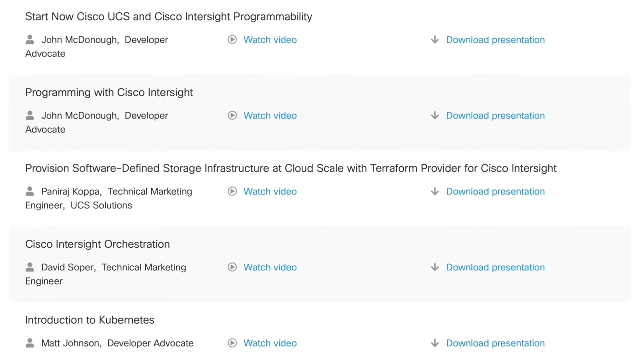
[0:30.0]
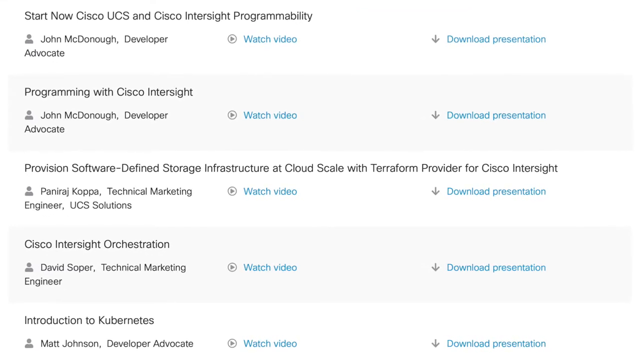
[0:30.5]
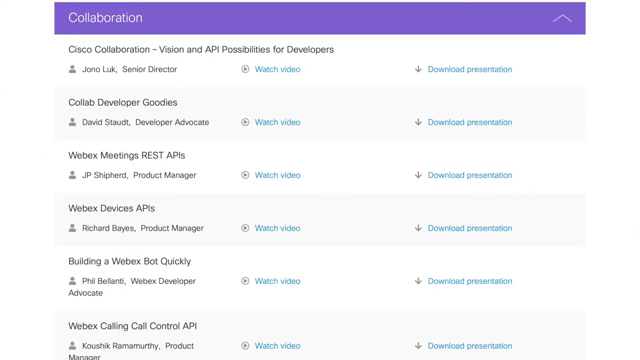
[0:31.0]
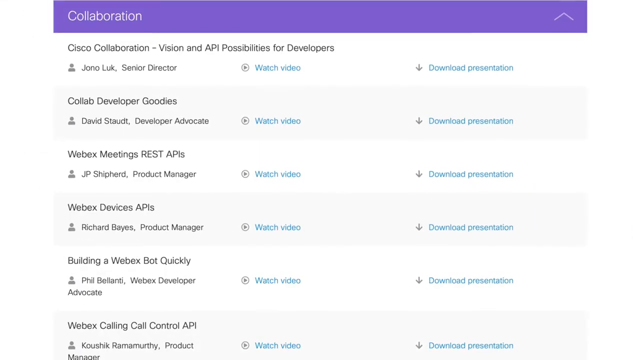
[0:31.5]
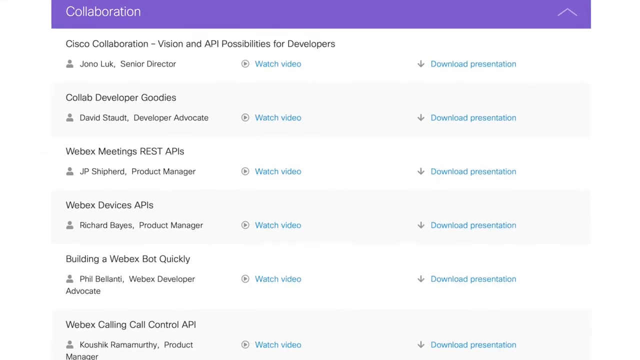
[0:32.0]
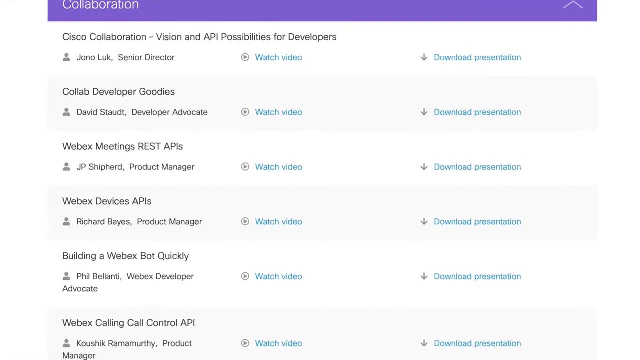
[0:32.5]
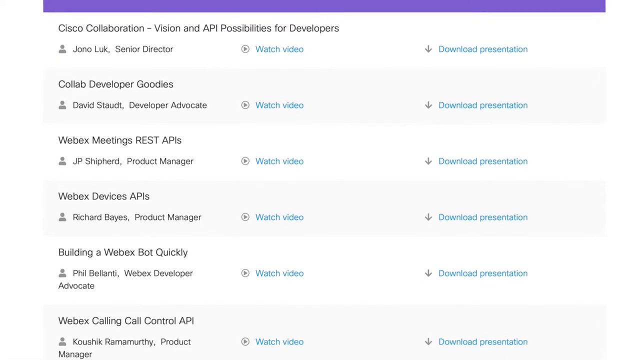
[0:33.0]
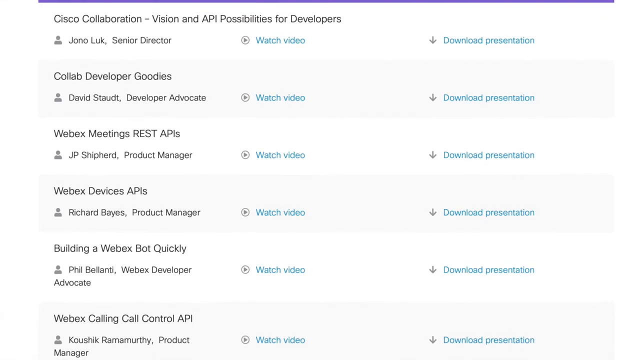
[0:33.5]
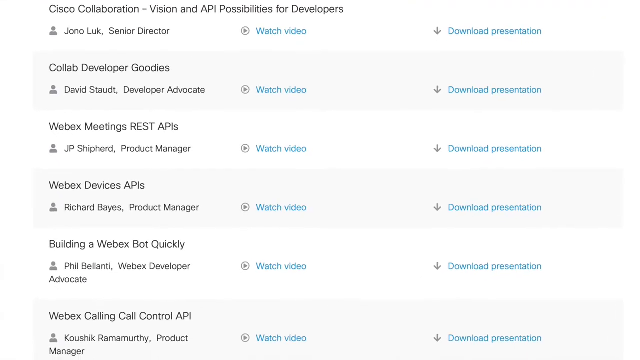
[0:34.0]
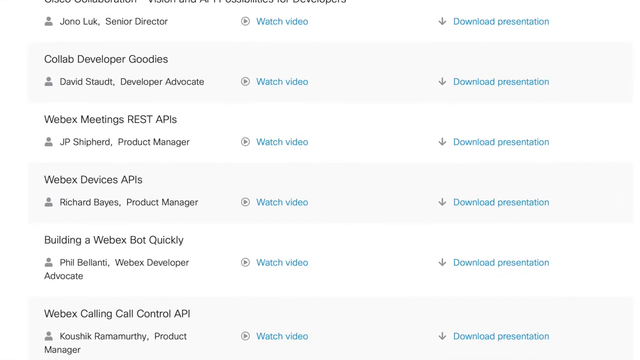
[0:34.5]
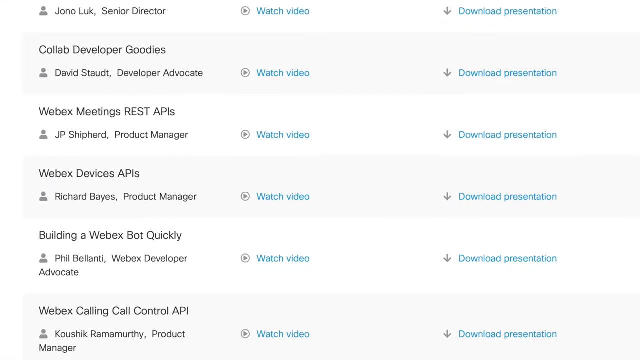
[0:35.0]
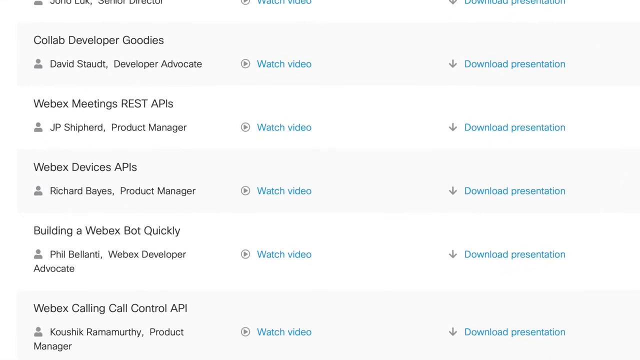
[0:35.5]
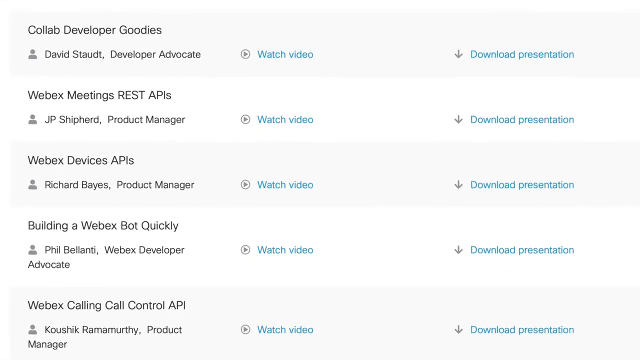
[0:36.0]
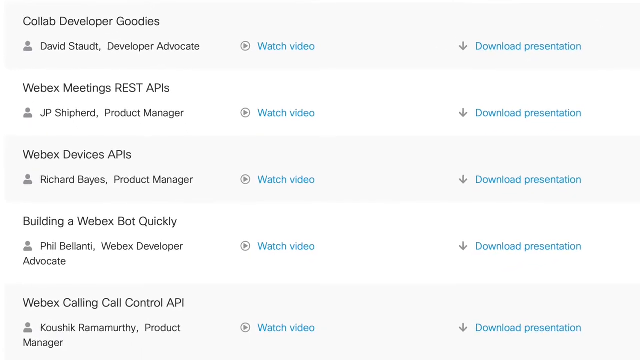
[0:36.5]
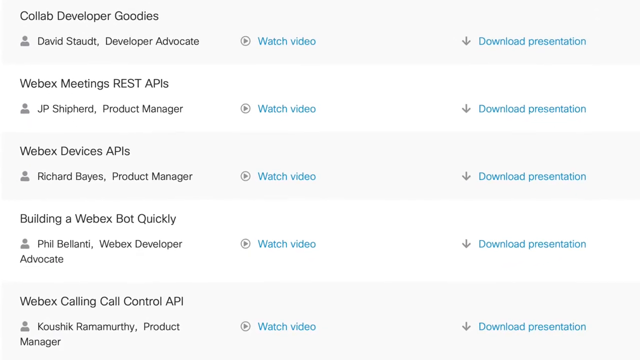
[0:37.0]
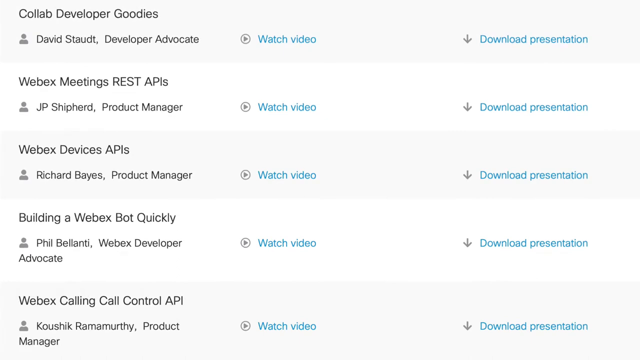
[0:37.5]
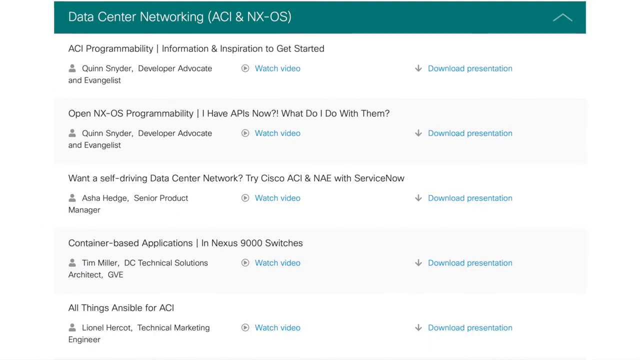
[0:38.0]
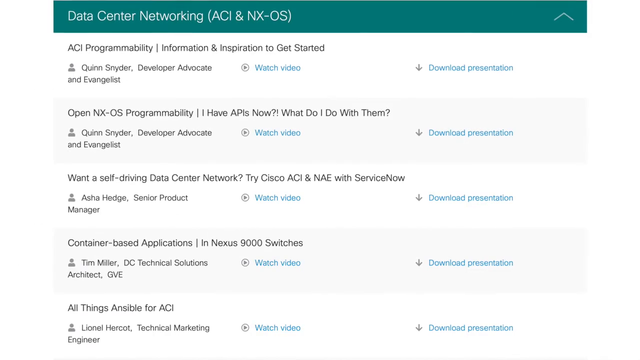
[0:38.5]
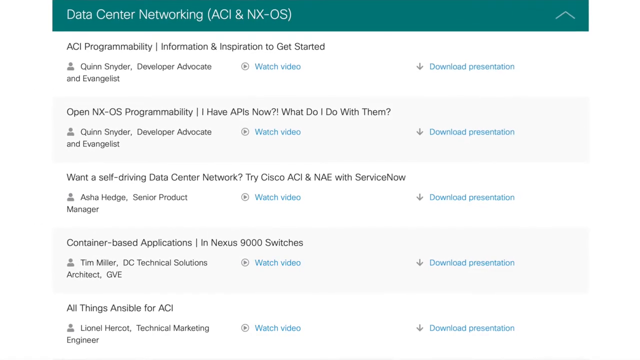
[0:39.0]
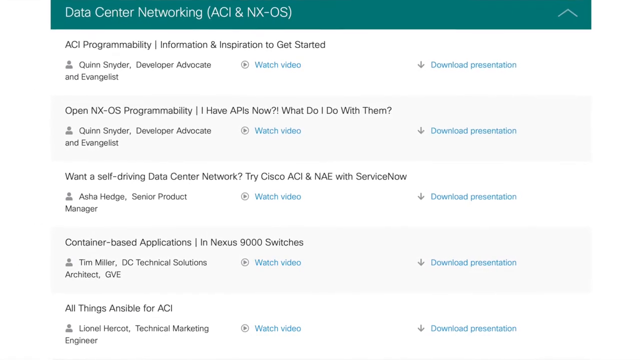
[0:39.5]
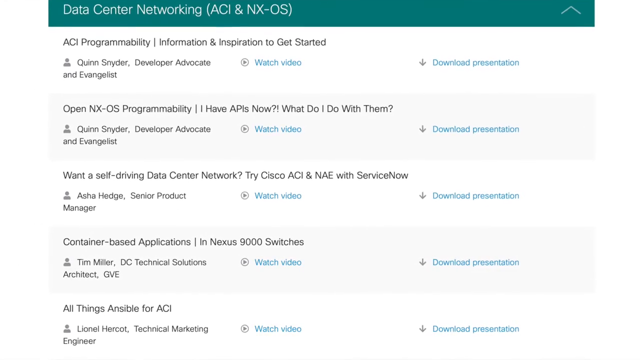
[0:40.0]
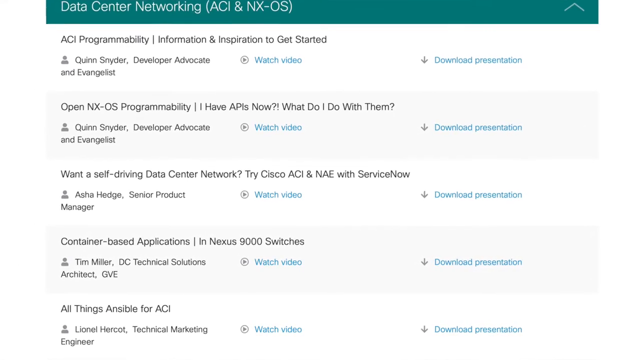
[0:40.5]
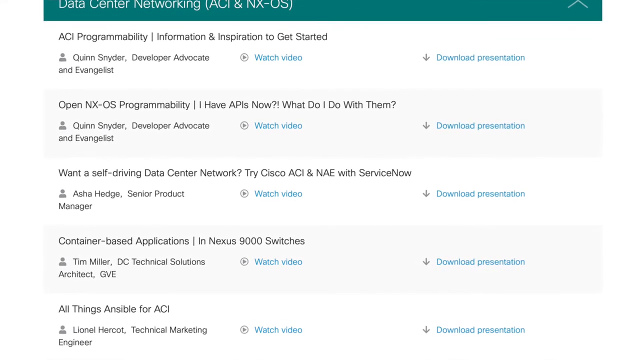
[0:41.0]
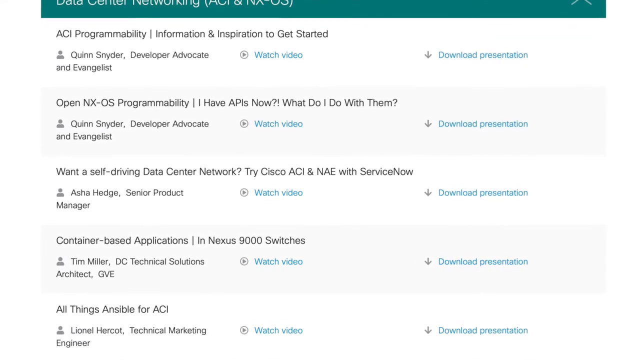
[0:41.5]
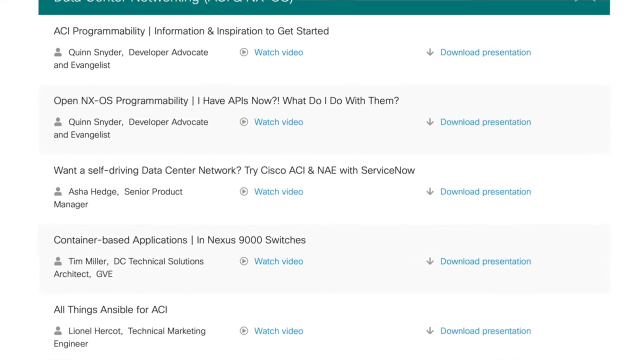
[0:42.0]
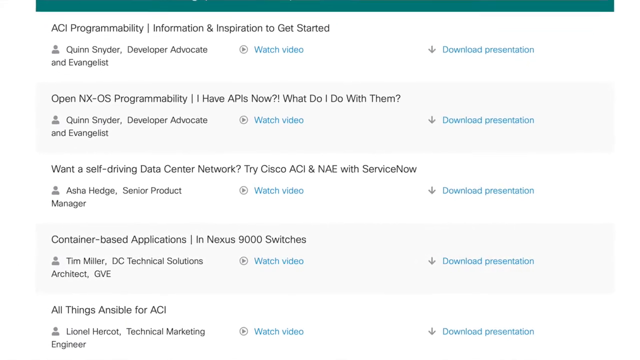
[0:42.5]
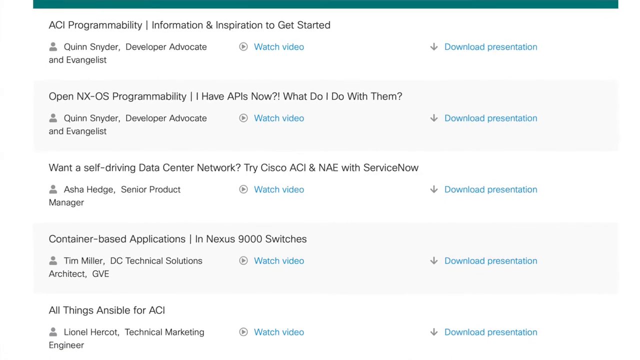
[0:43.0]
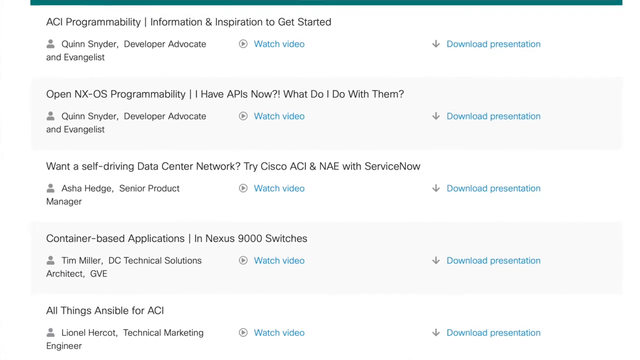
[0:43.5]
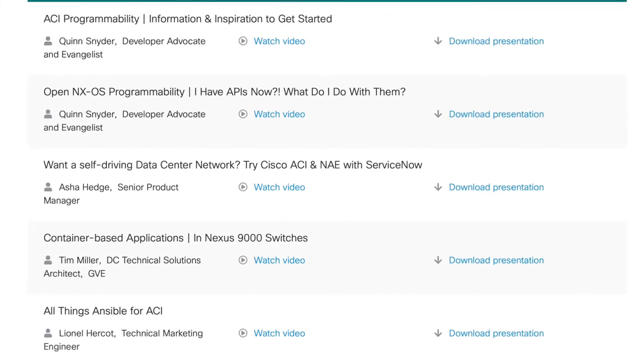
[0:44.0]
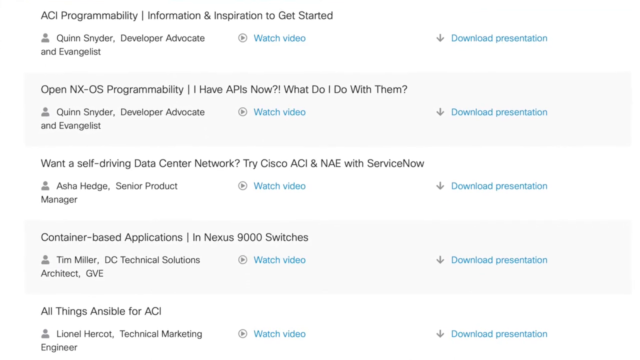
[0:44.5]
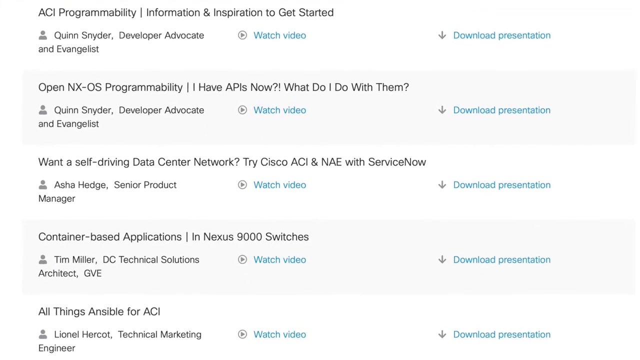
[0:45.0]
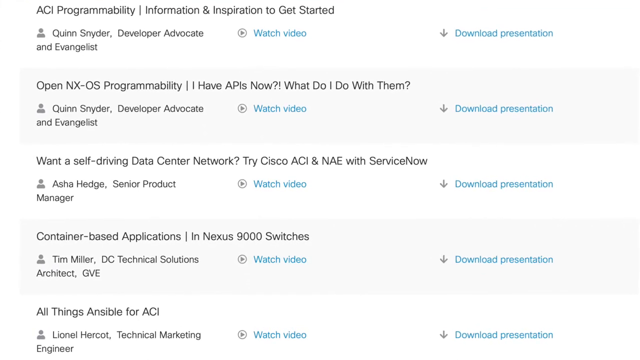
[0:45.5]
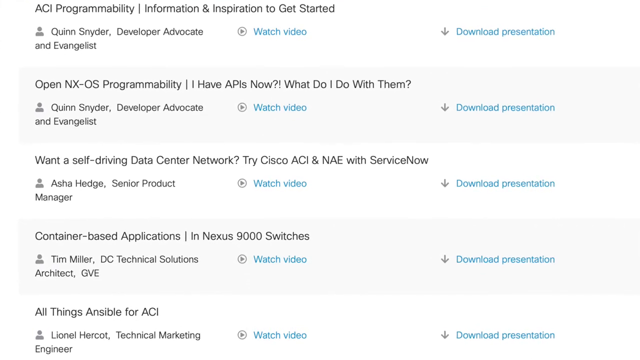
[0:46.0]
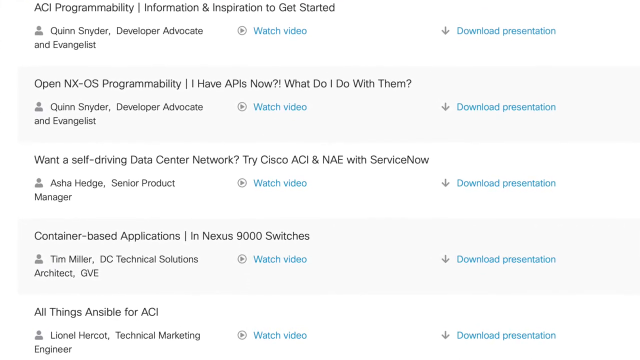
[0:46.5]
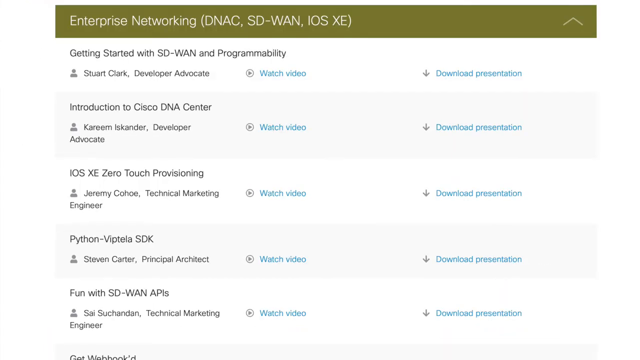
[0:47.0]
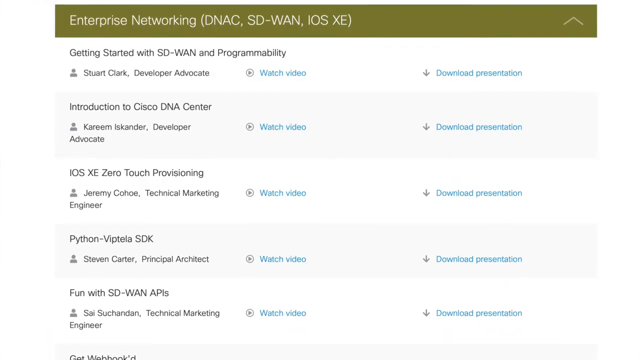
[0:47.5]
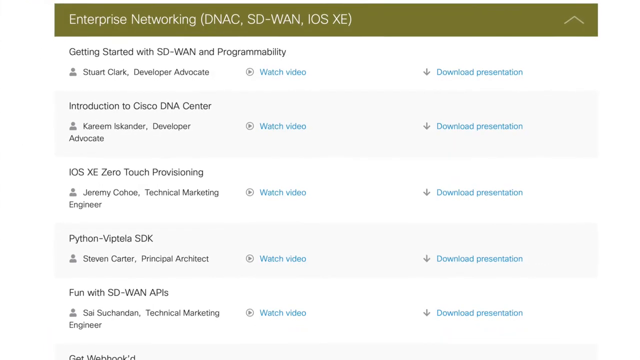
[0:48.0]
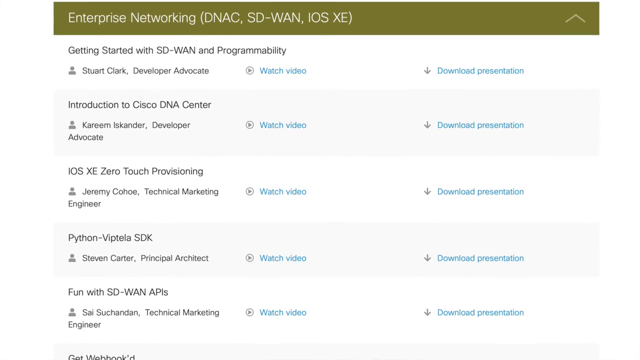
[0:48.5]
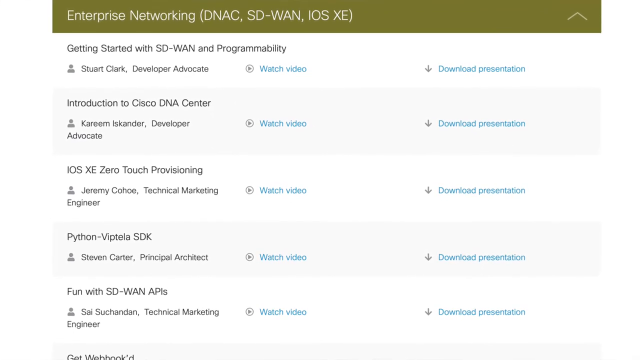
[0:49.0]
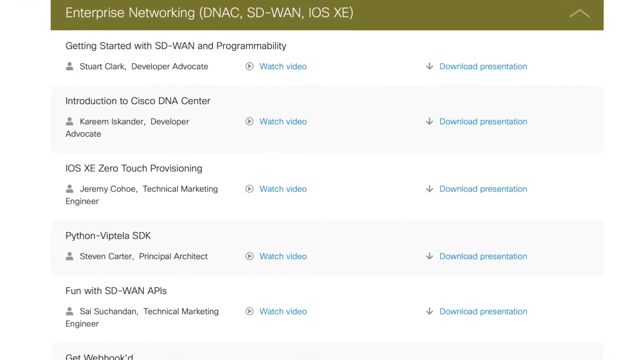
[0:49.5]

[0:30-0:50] A page about collaboration lists multiple names; as it zooms in, five names become visible. To the right of the names is a blue "watch video" hyperlink, and on the next line is "download presentation" with a gray arrow beside it. The view keeps zooming in, then zooms out to another page about data center networking, with four names and four areas linking to the video or the presentation download. A further page with hyperlinks and "start now" follows, then a collaboration page moves toward the viewer, showing four people with watch video and download presentation hyperlinks. The enterprise network is highlighted, and behind it are more collaboration pages with names mentioning WebEx and WebEx devices. Text reads "Want a self-driving data center network, try Cisco."